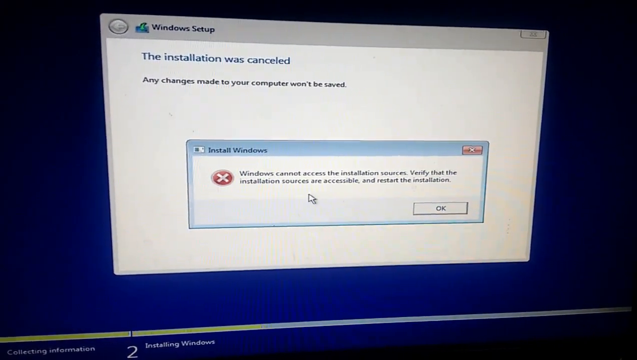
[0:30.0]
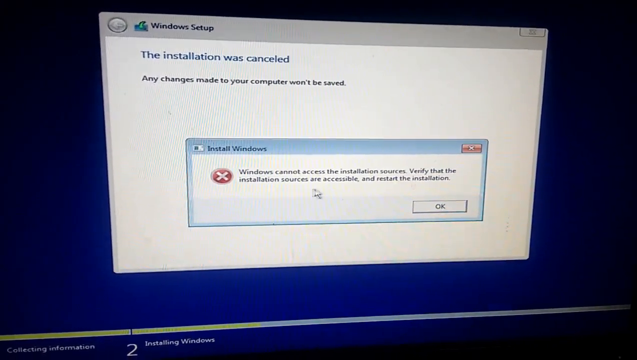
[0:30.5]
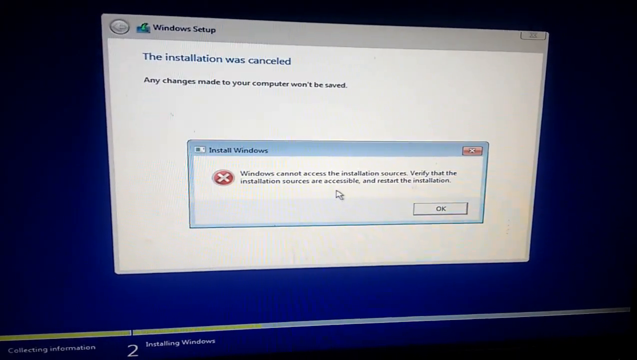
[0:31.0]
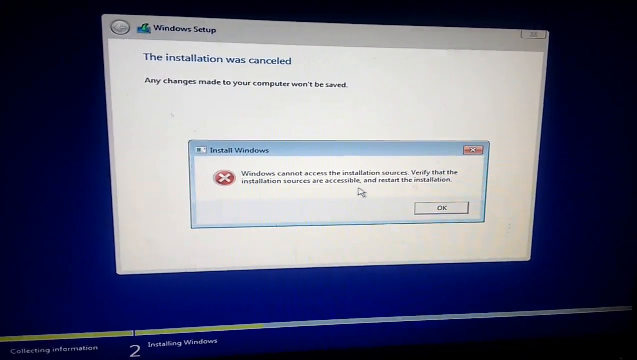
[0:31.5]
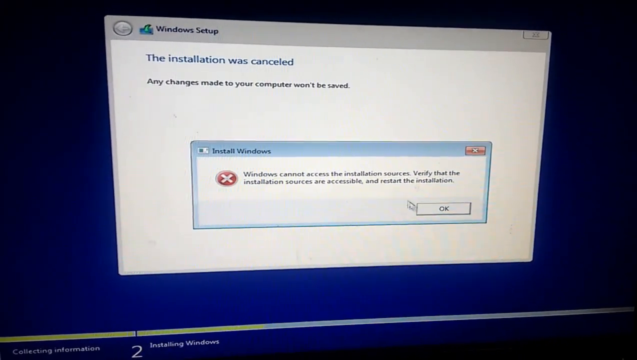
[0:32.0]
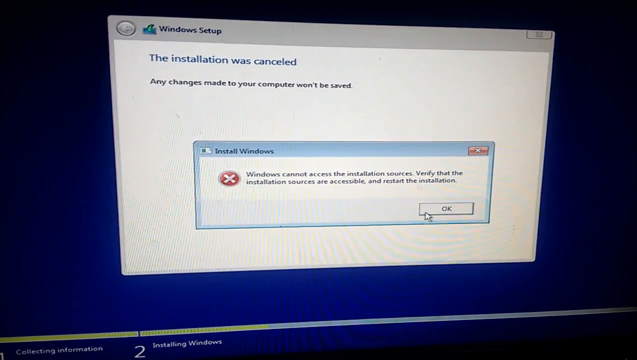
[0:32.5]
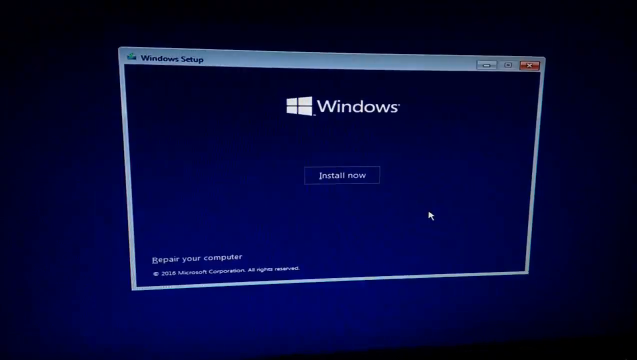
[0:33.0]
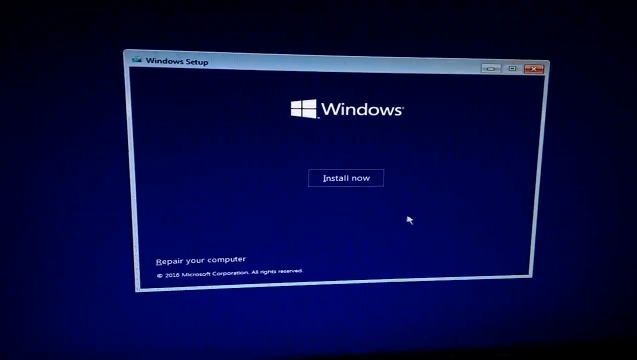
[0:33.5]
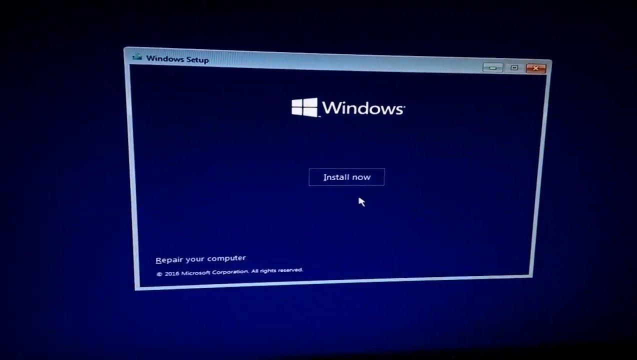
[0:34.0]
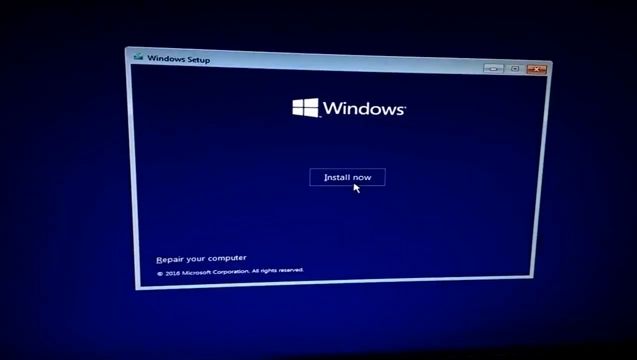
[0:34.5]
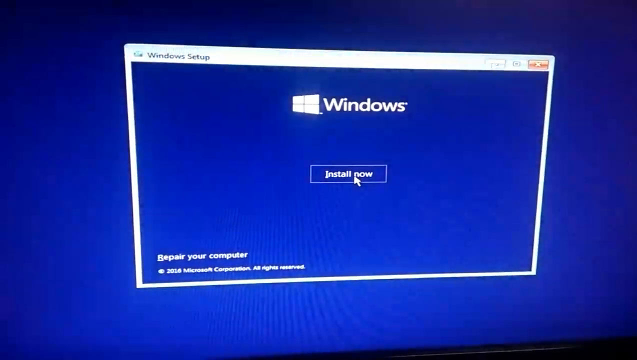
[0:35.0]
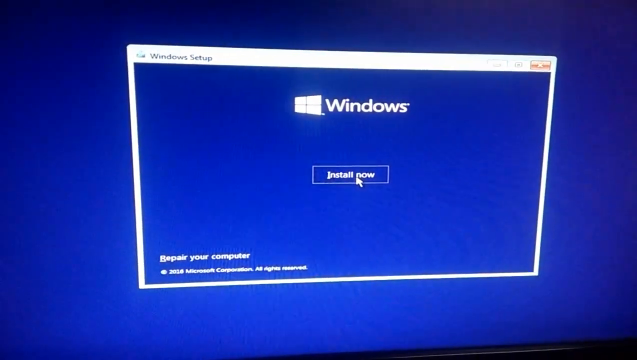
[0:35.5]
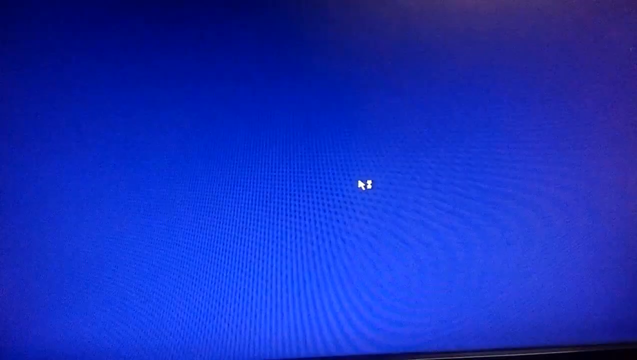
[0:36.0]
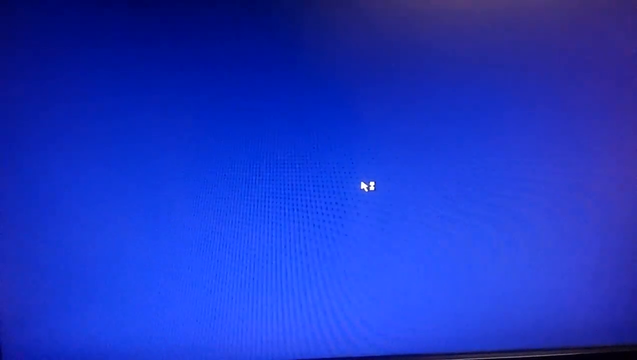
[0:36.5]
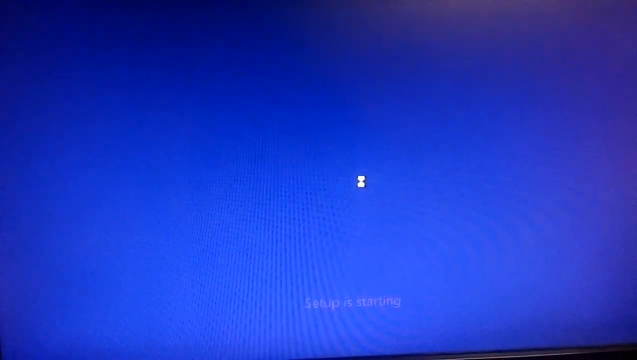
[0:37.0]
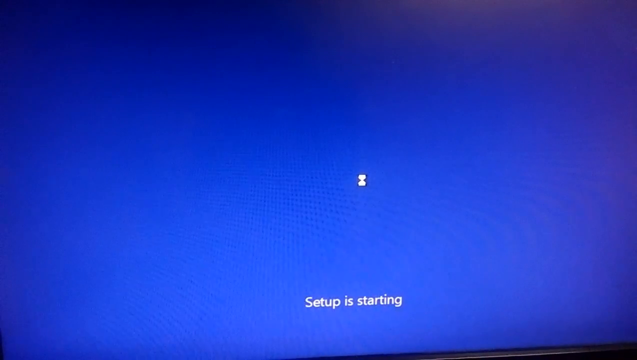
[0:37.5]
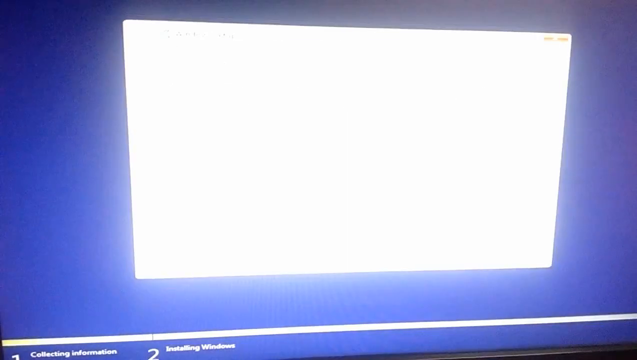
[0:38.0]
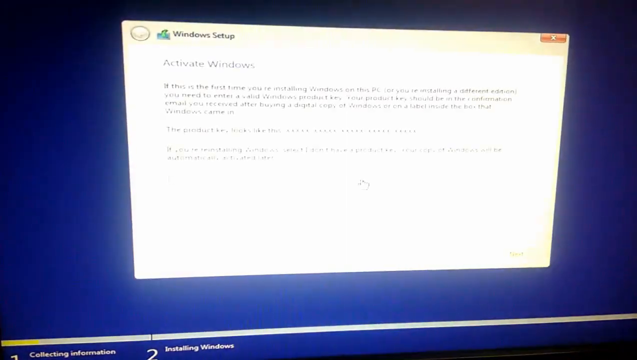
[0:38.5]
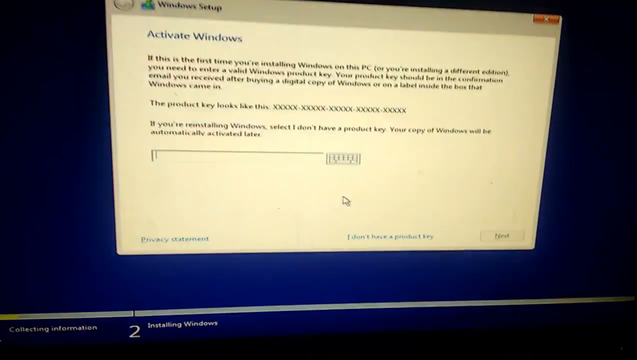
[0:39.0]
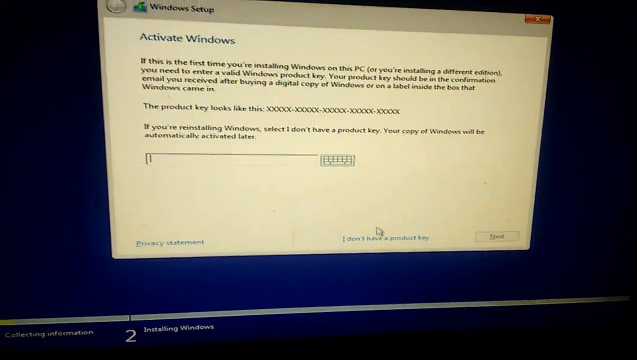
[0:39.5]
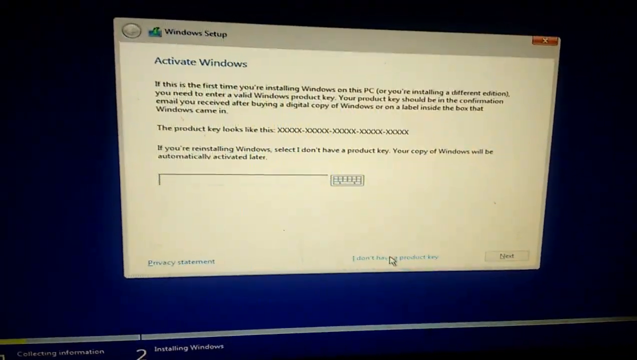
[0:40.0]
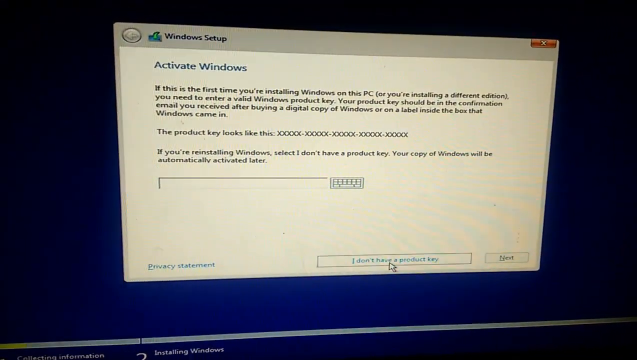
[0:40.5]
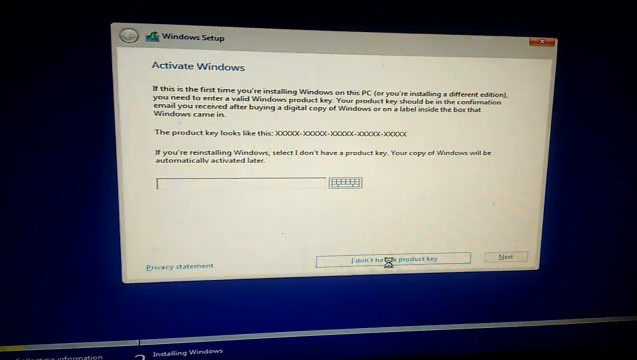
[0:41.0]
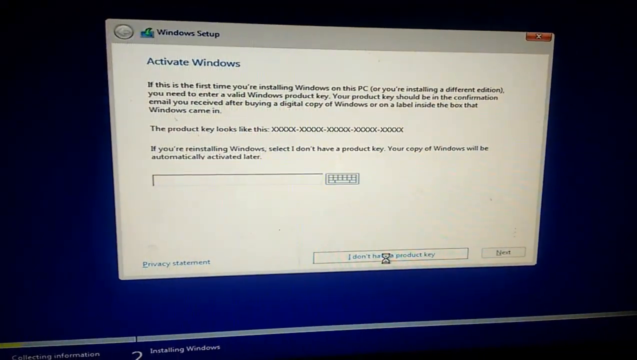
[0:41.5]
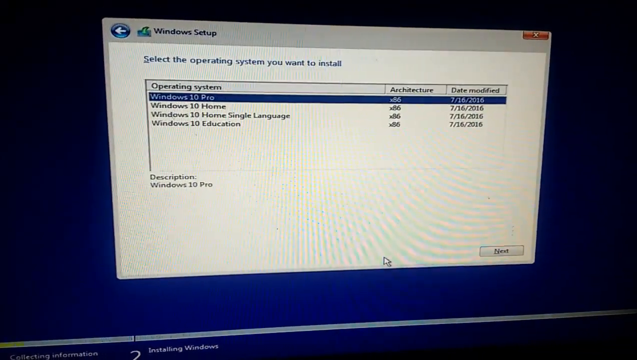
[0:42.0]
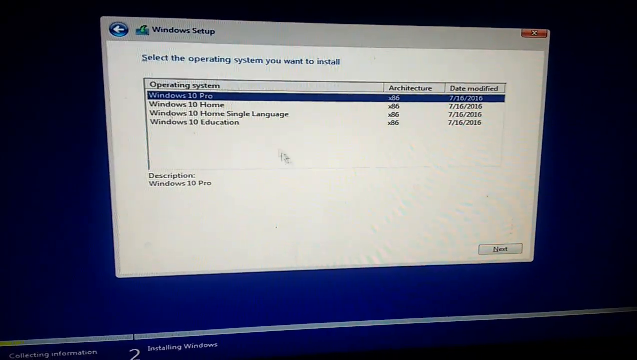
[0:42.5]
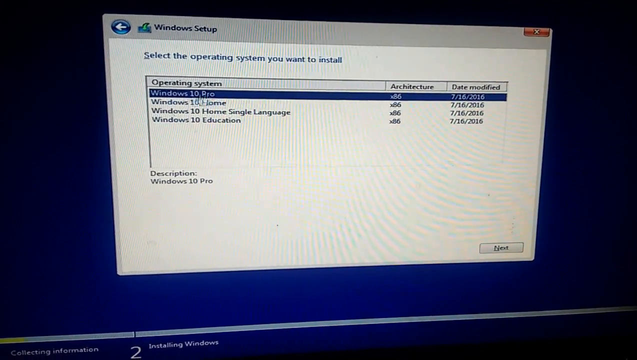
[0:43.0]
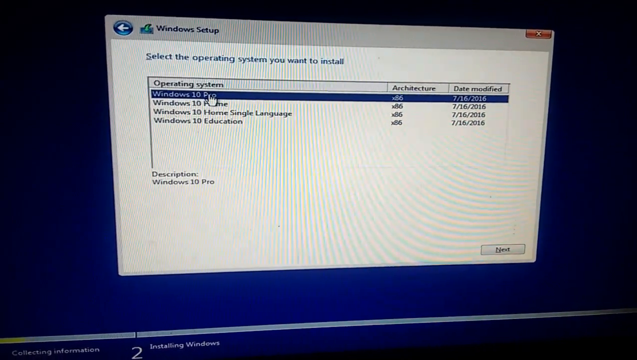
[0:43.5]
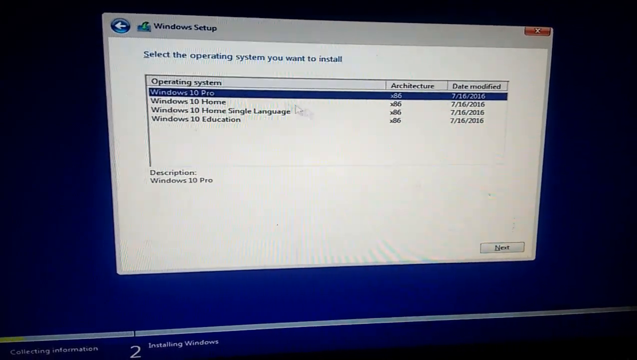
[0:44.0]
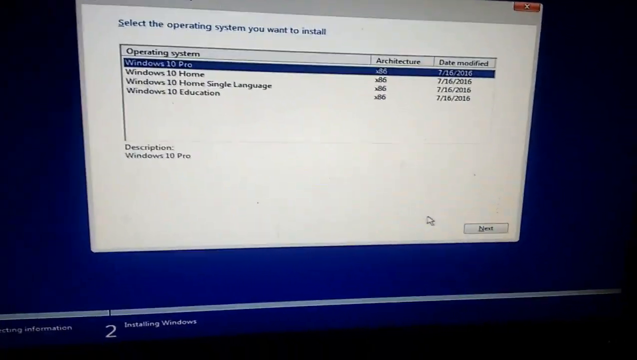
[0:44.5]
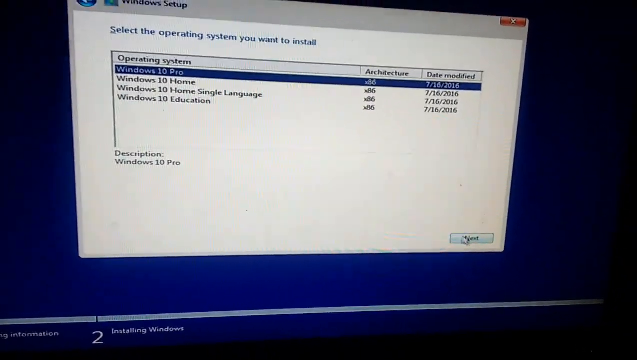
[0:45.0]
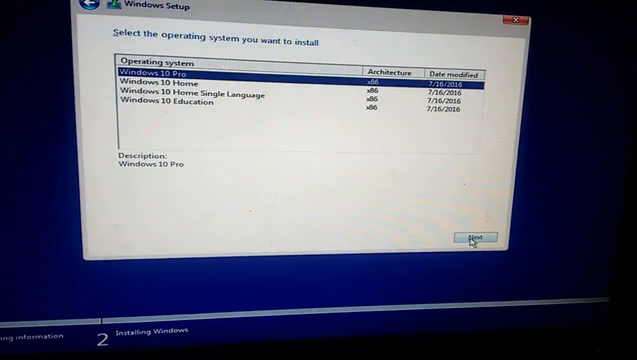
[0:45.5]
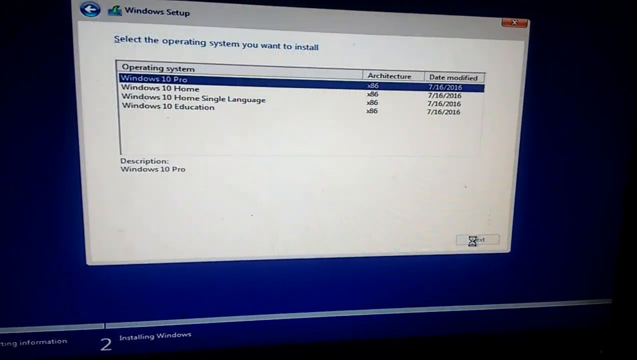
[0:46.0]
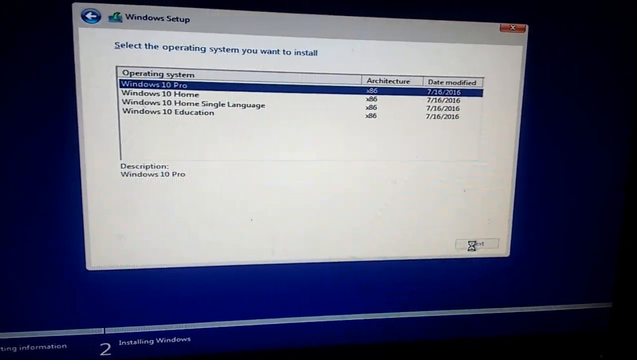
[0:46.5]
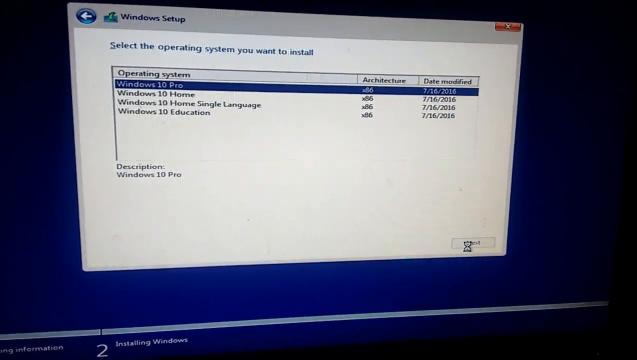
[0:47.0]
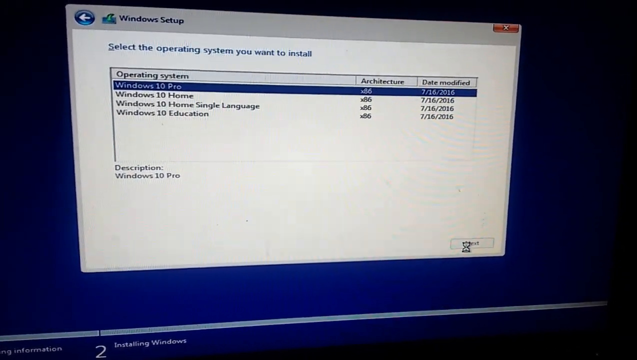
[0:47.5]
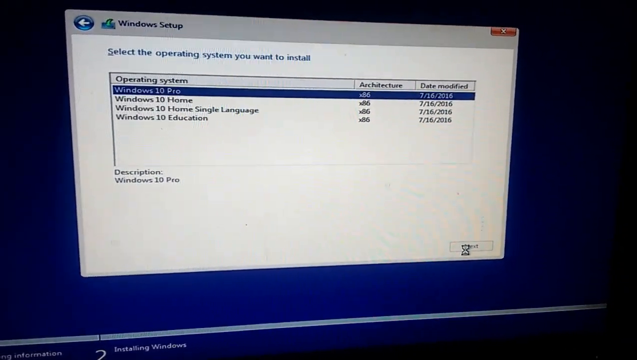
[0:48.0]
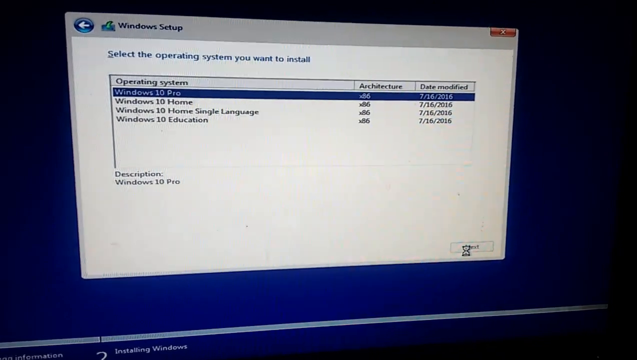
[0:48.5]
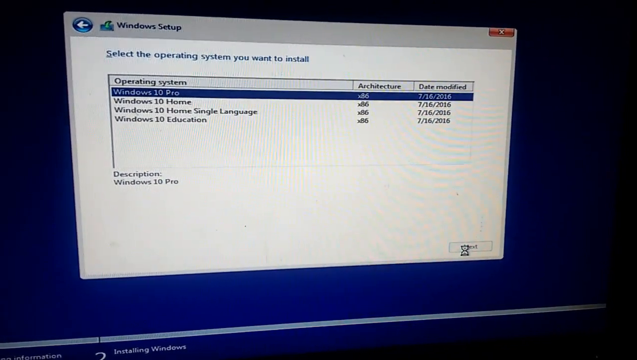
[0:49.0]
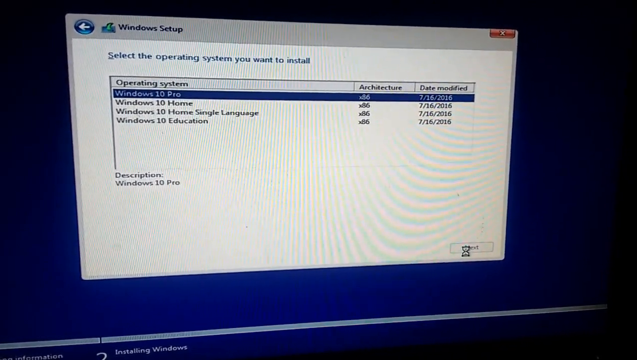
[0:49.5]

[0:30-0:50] A cursor appears on the screen and seems to follow the text in the sub pop-up window, which says "Windows cannot access the installation sources. Verify that the installation sources are accessible and restart the installation." The cursor moves over to the OK button and clicks it, and the pop-up disappears. The Windows Setup window is now the same dark blue color as the background, with the Windows logo and a big "Install now" button. The cursor moves to "Install now" and clicks it, and a button or label at the bottom saying "Setup is happening" appears. A new window titled "Activate Windows" follows, with a lot of text, apparently asking for a product key. The cursor clicks a button that says "I don't have a product key," which leads to a window that says "Select the operating system you want to install." The options are Windows 10 Pro, Windows 10 Home, Windows 10 Home Single Language and Windows 10 Education. He selects Windows 10 Pro.